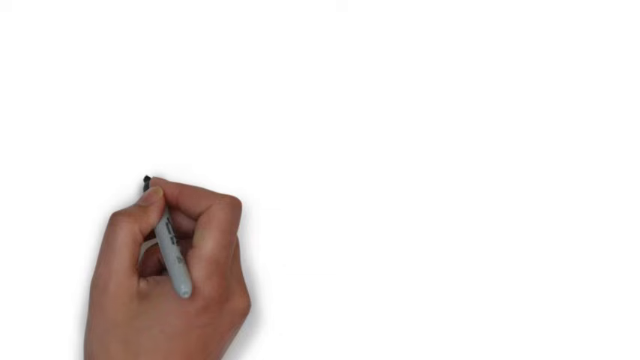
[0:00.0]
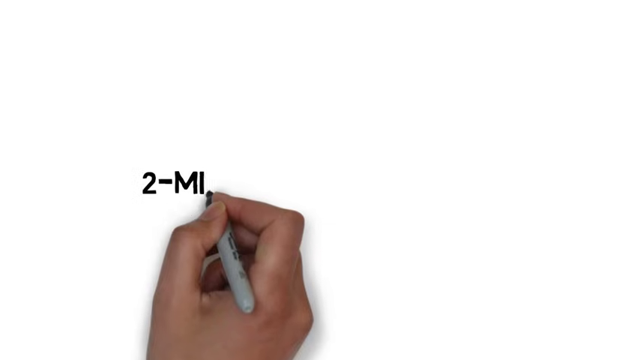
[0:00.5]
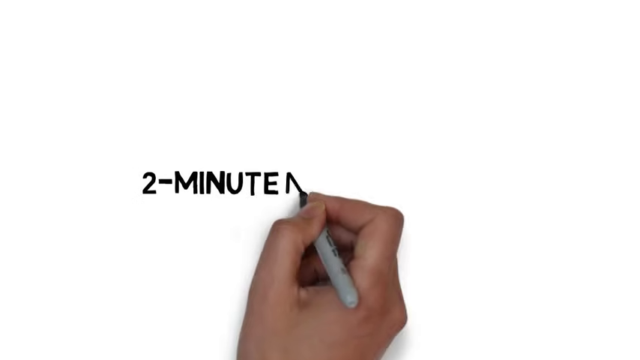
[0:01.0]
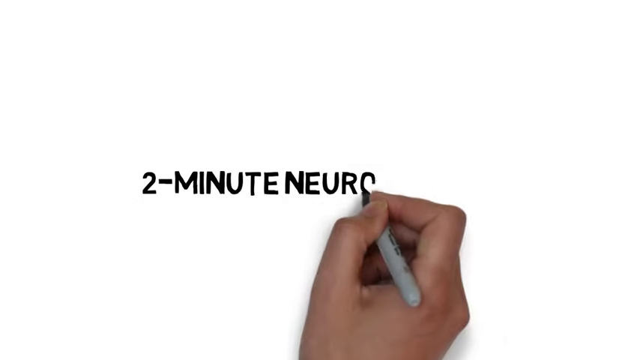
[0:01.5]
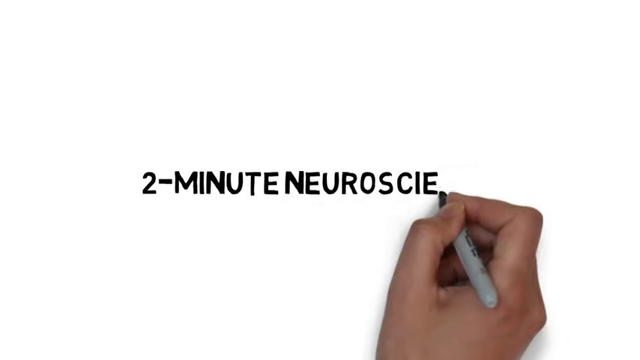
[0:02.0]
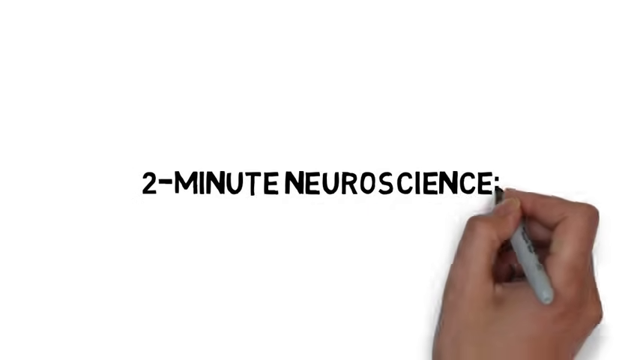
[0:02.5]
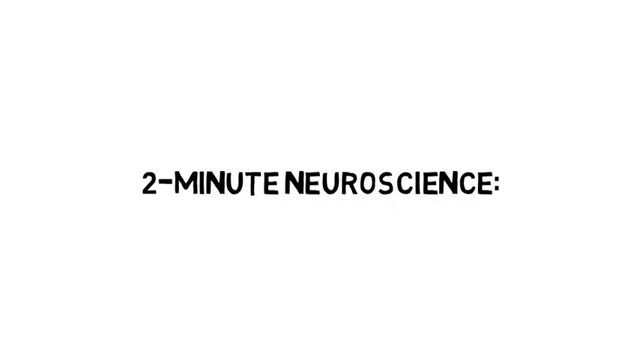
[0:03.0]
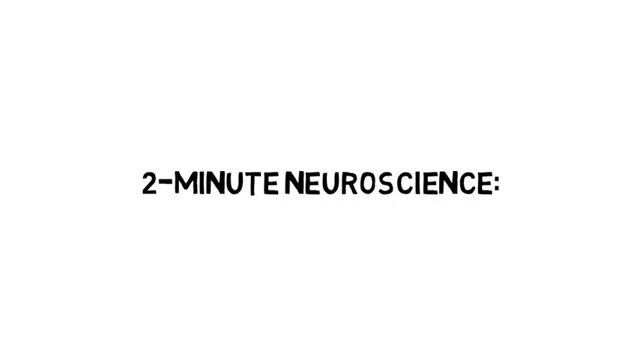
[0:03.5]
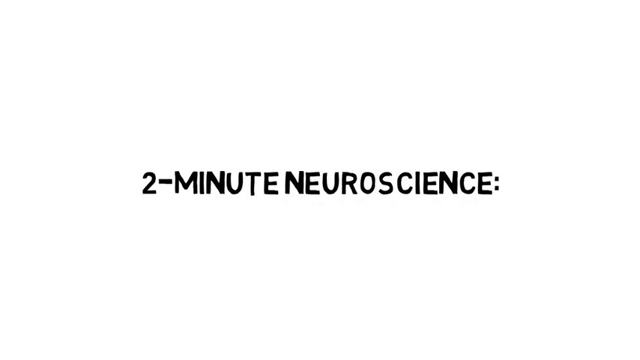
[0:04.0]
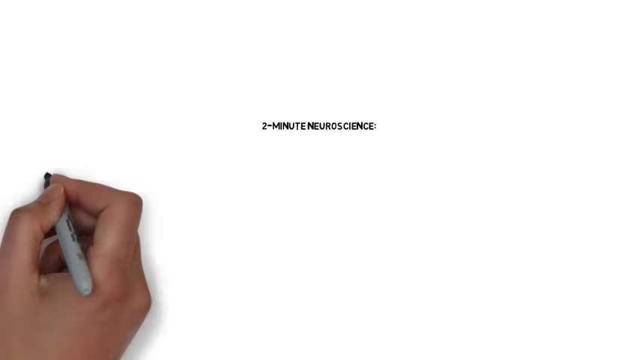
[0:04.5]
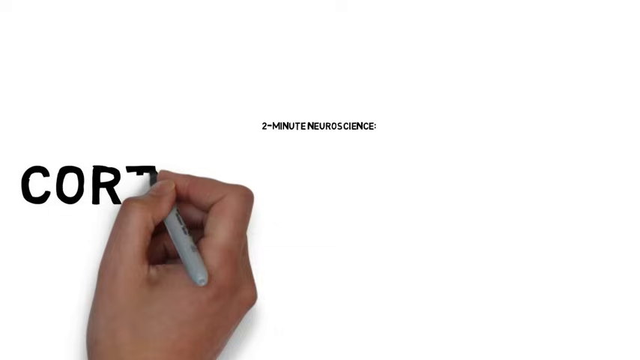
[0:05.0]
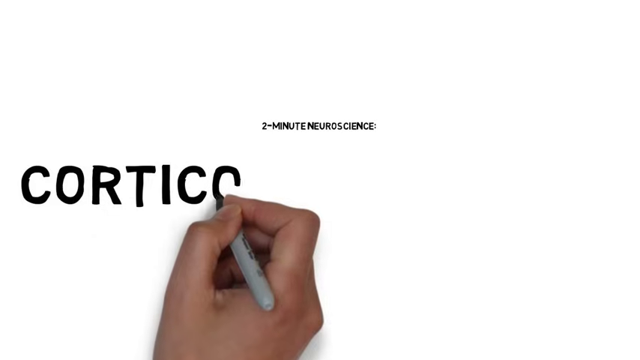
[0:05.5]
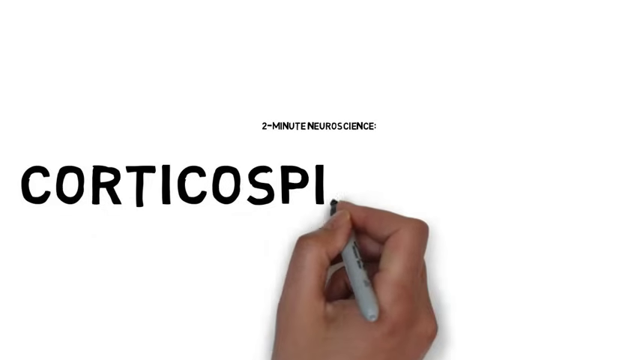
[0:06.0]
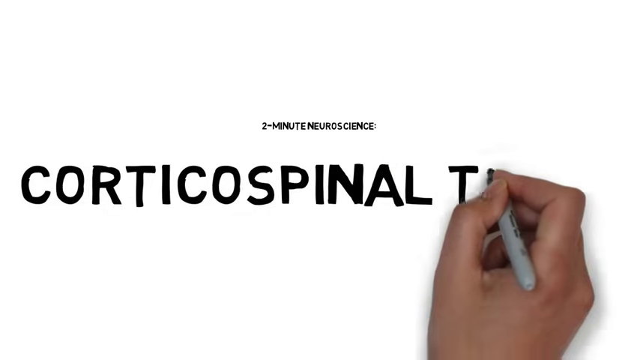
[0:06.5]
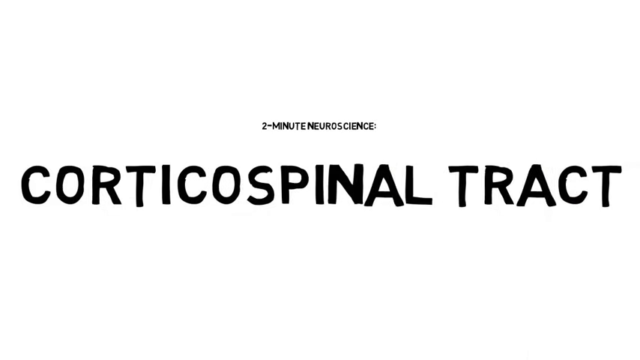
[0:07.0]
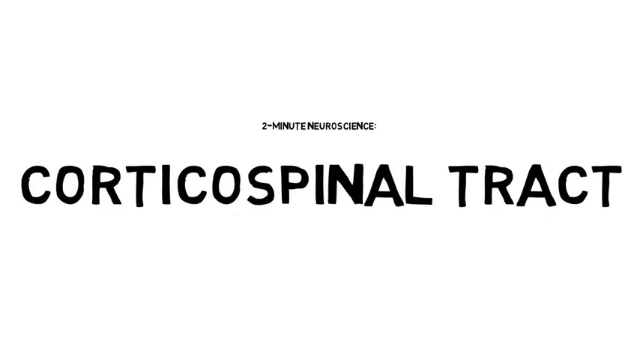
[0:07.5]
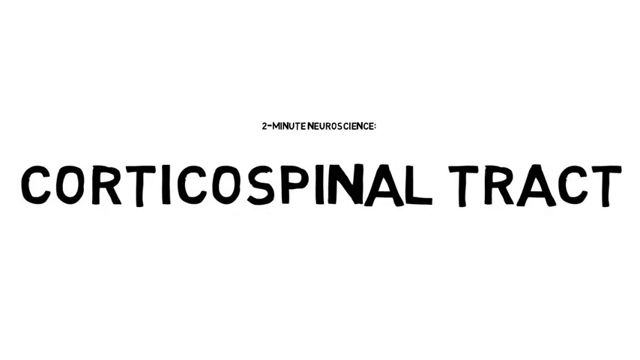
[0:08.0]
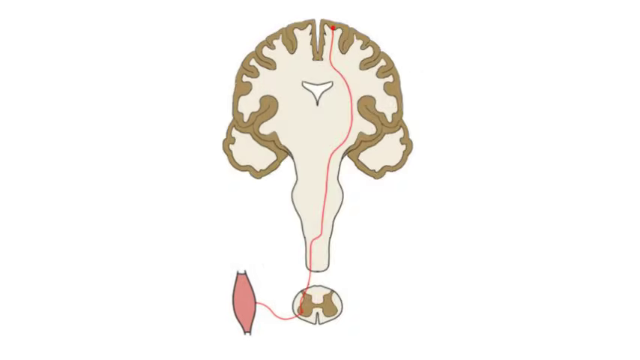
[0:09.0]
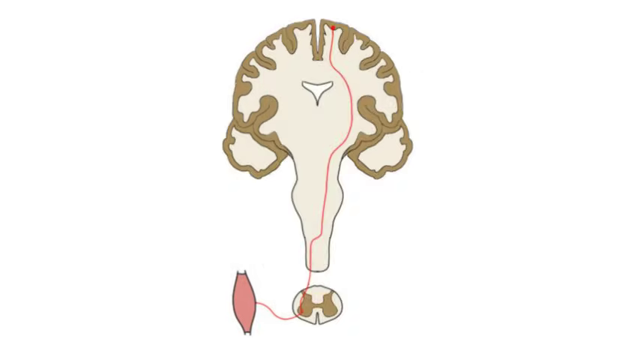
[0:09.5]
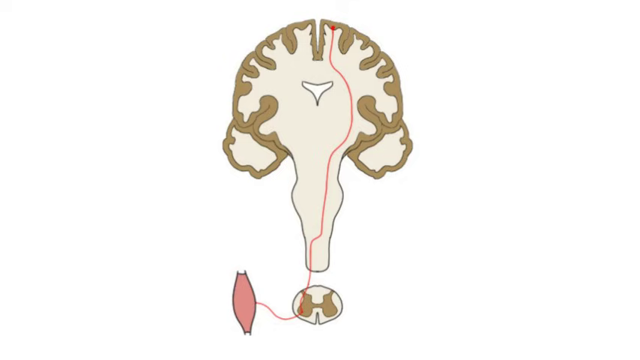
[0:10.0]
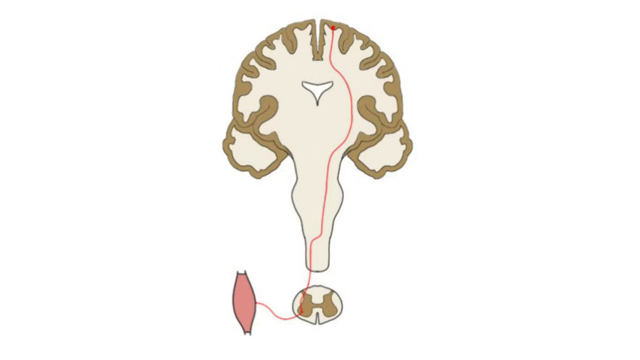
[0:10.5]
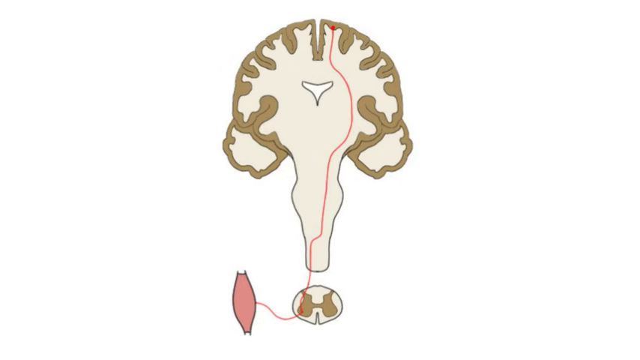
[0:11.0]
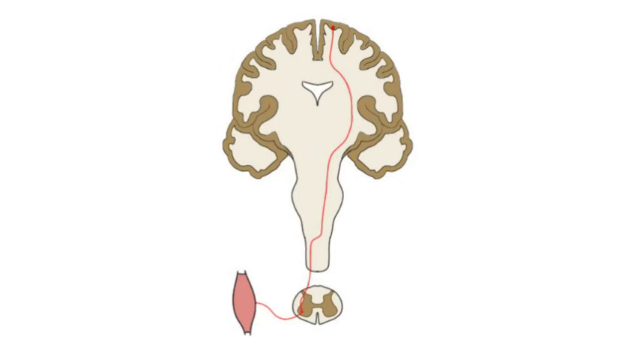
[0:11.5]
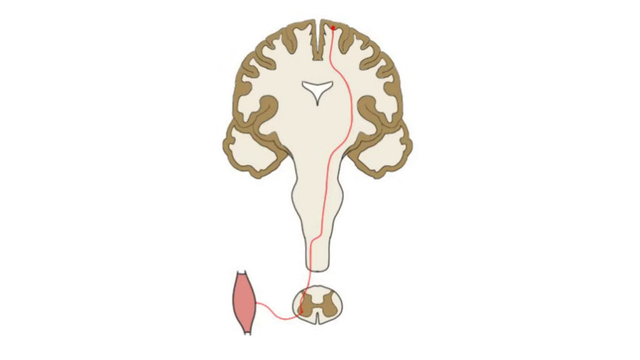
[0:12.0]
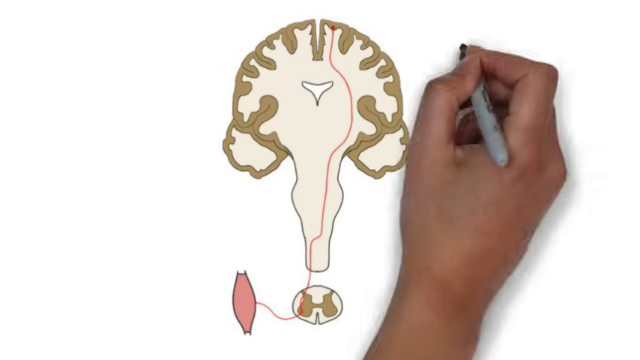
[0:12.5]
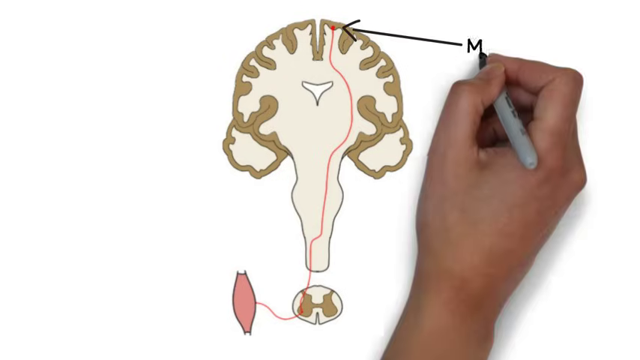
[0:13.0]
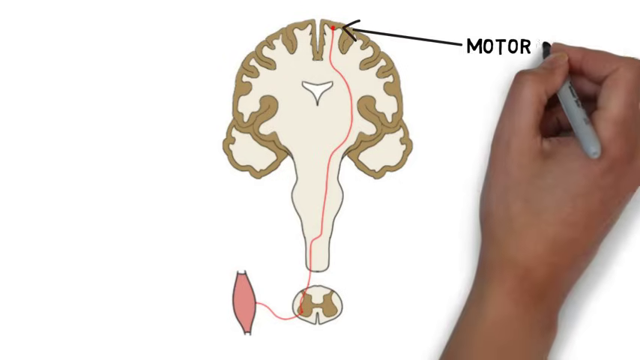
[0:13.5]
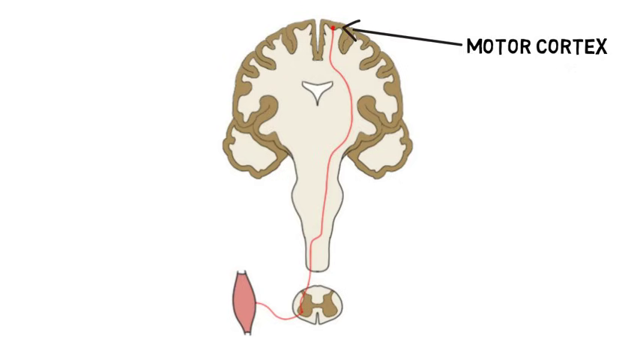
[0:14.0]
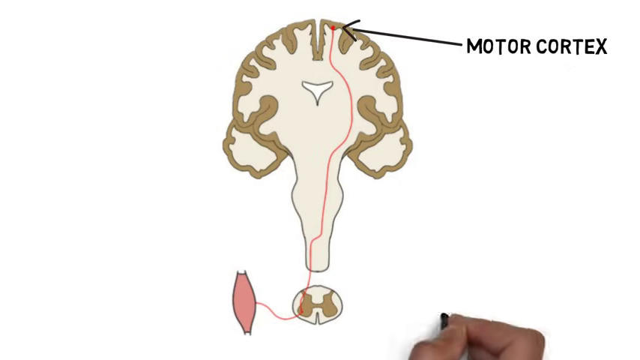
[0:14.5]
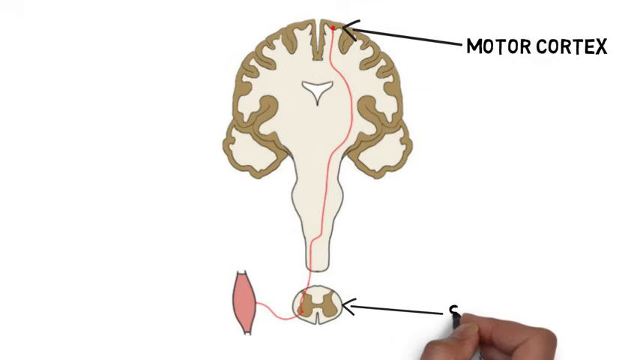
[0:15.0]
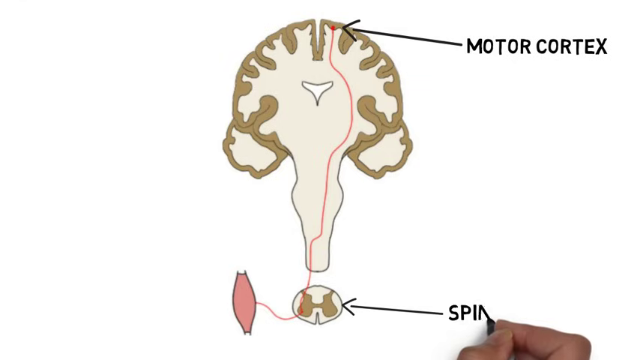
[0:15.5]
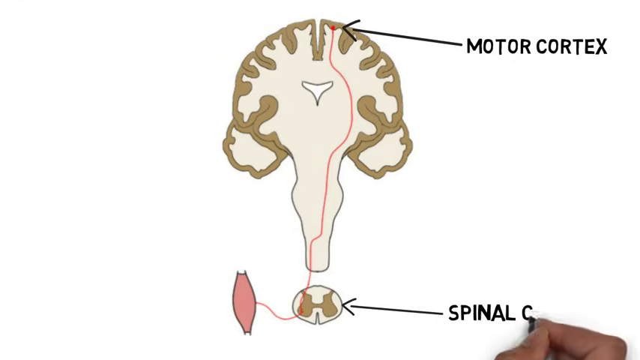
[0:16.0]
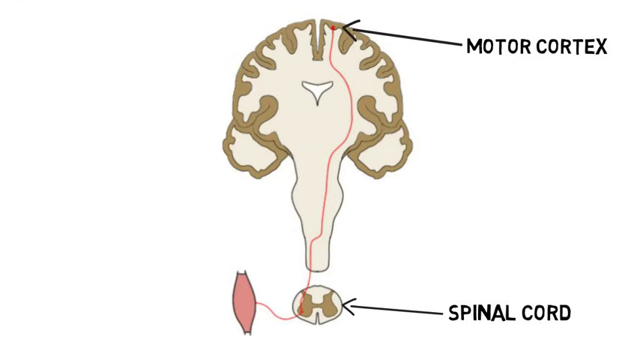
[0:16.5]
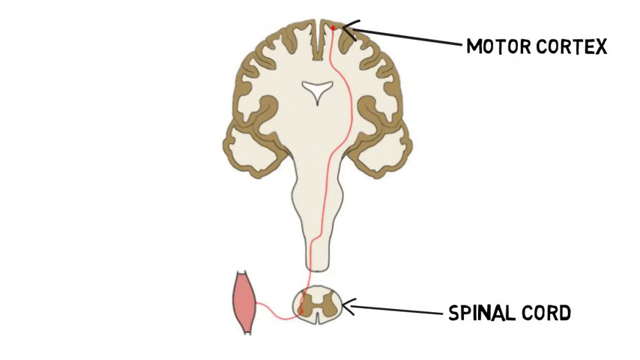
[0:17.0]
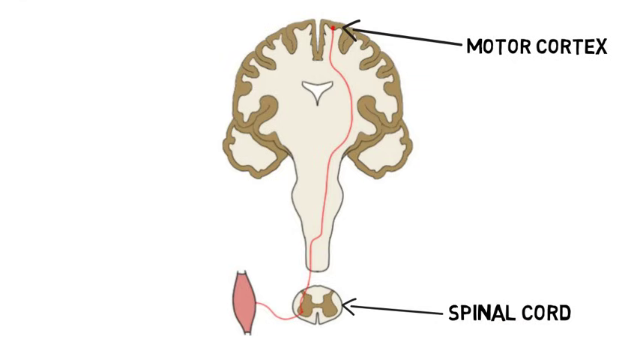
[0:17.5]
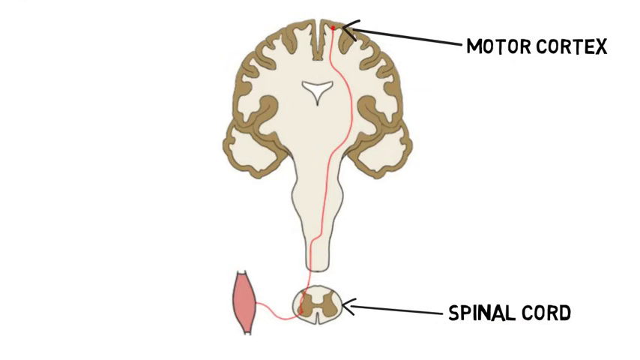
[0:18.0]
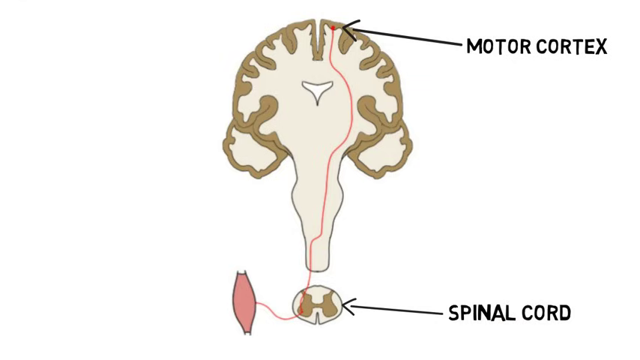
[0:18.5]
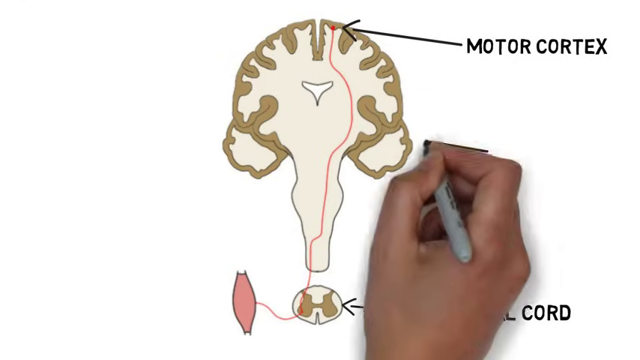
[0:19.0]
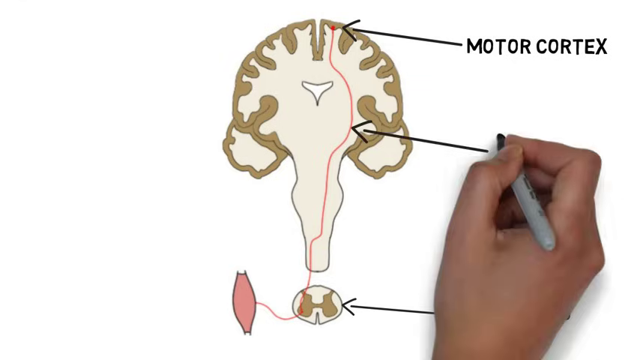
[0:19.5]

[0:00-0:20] A white screen appears with a hand holding a sharpie at the bottom of the frame. The hand writes "2-Minute Neuroscience" in the middle of the screen. The text then changes from large to small in the center, and the hand moves to the left of the screen and writes "Corticospinal tract" with the sharpie. The text flies to the left of the screen, leaving the screen white again. The hand then drops a detailed diagram into the center of the screen. An arrow points at a red dot at the top, and at the end of the arrow is the word "motor cortex", which the hand has drawn and written. The hand moves down, draws another arrow at the bottom part of the image, and writes "spinal cord" at the end of it. The hand then comes up and draws an arrow in the center line connected to the motor cortex, and starts writing a word at its end.